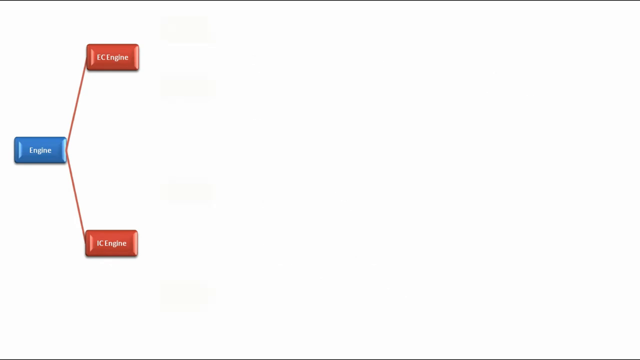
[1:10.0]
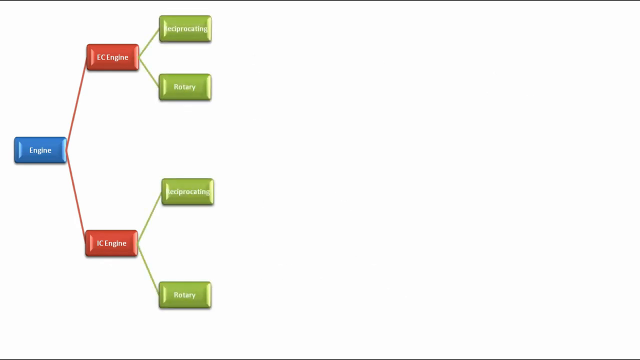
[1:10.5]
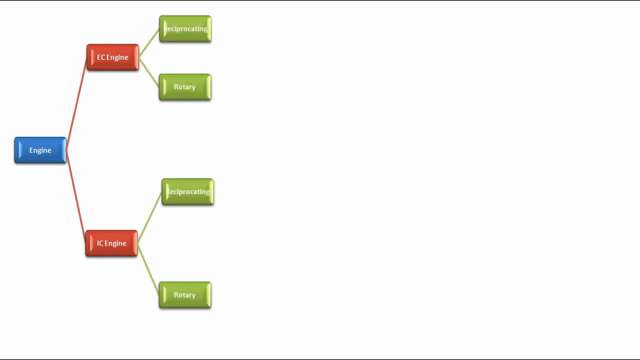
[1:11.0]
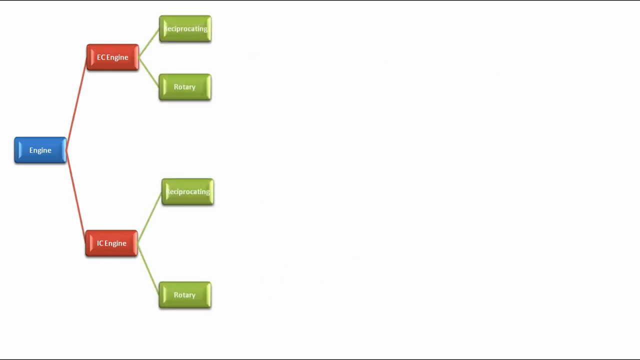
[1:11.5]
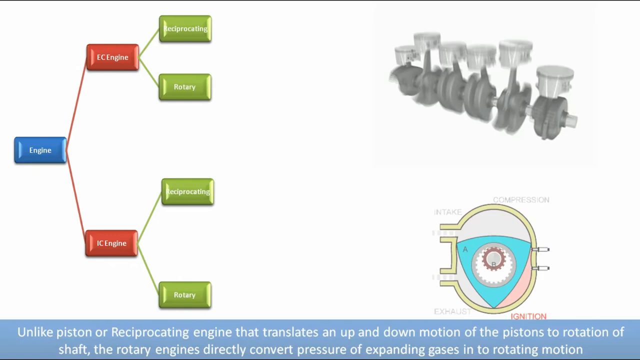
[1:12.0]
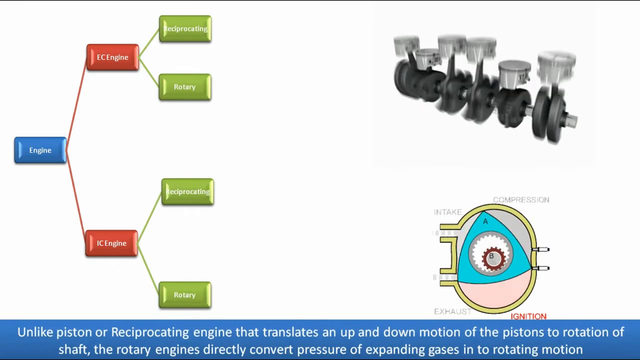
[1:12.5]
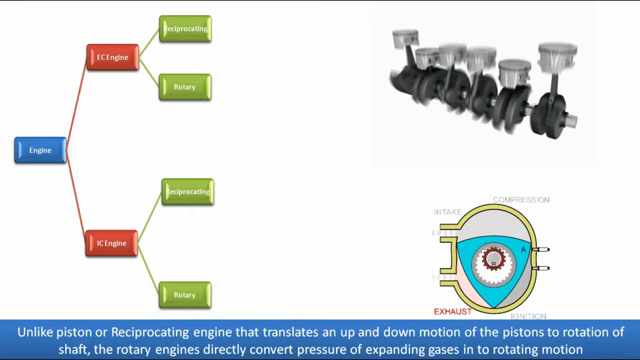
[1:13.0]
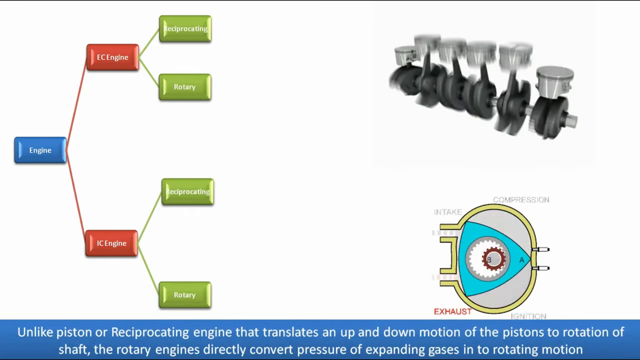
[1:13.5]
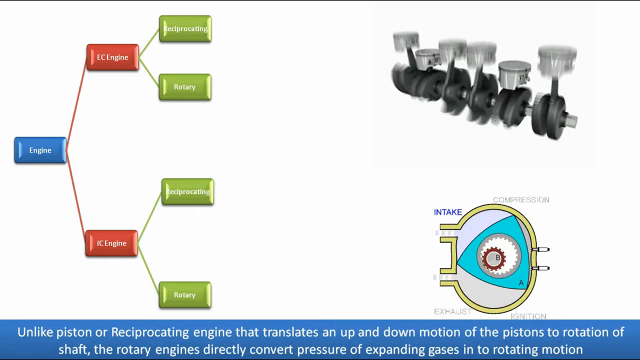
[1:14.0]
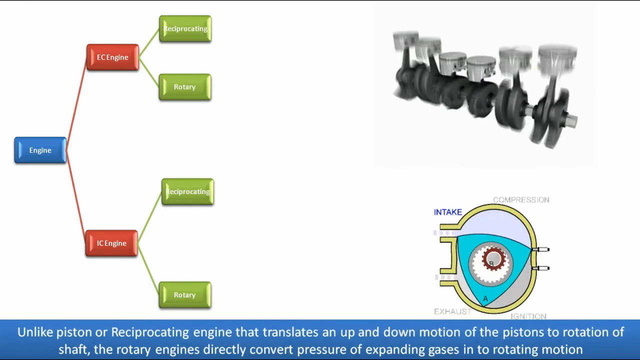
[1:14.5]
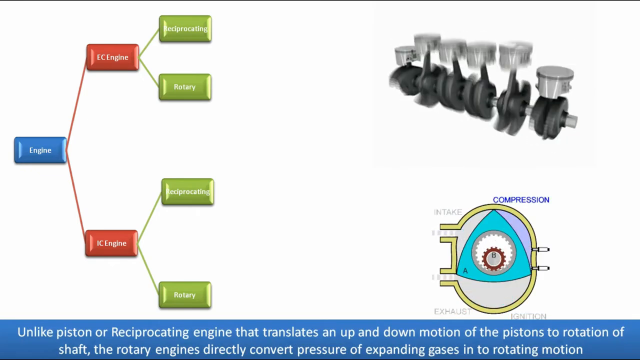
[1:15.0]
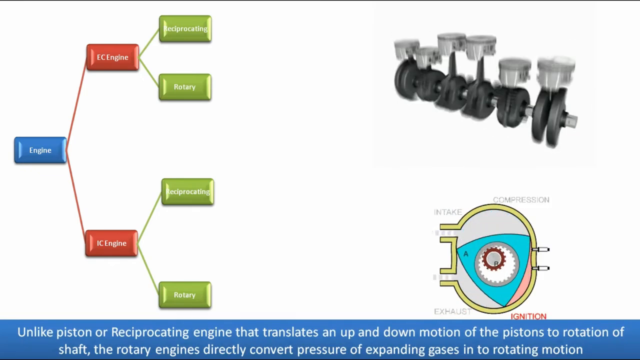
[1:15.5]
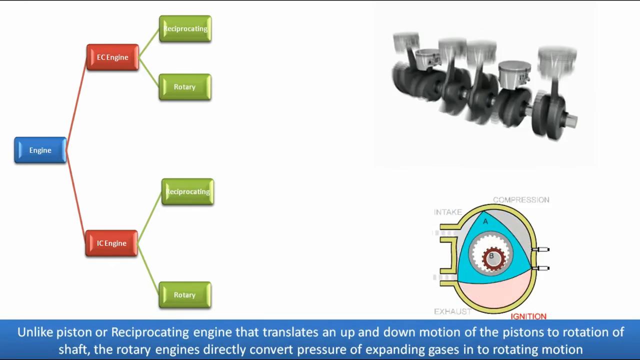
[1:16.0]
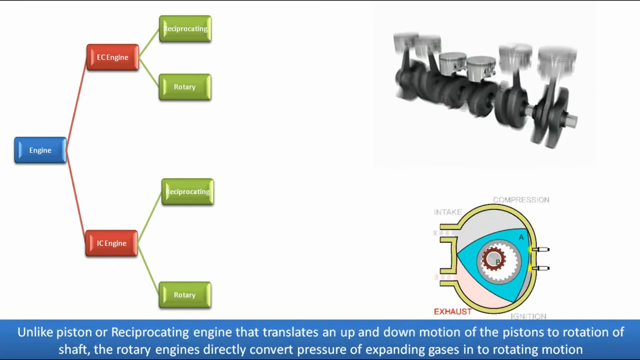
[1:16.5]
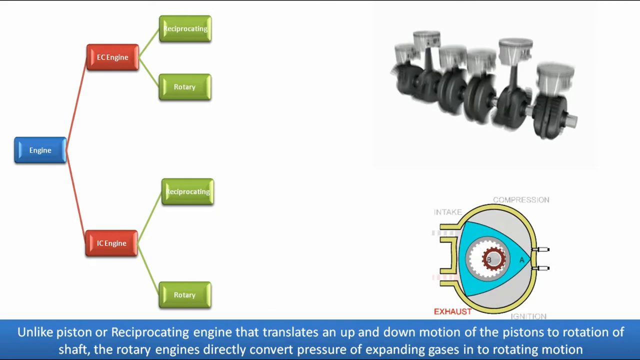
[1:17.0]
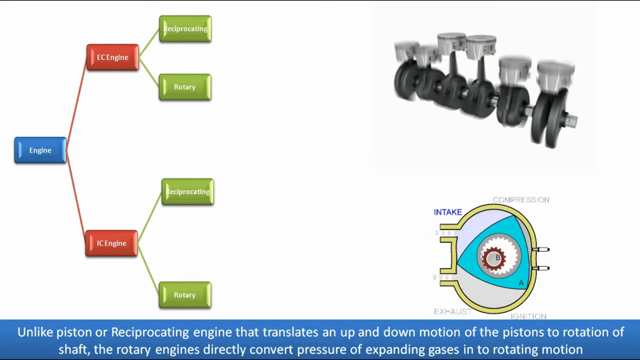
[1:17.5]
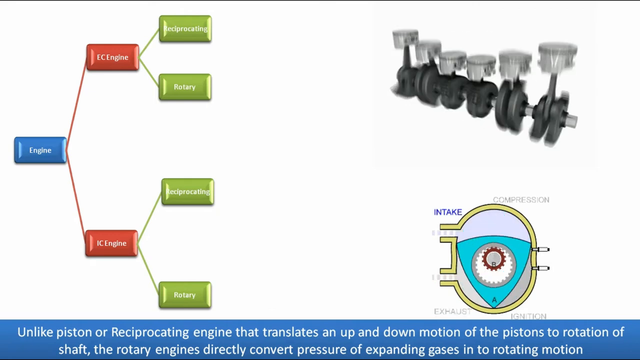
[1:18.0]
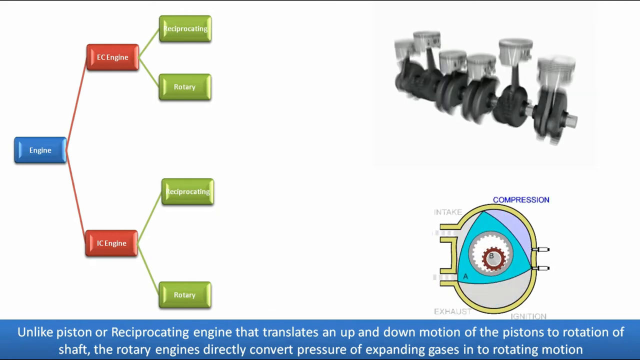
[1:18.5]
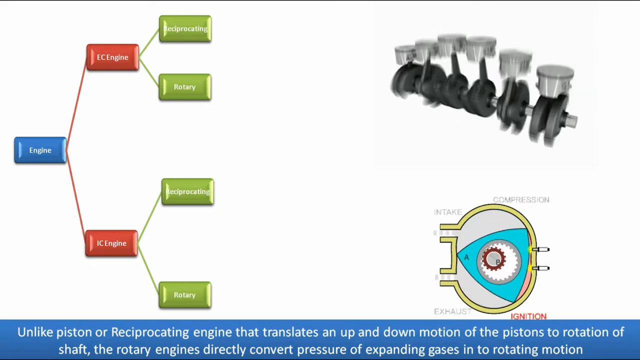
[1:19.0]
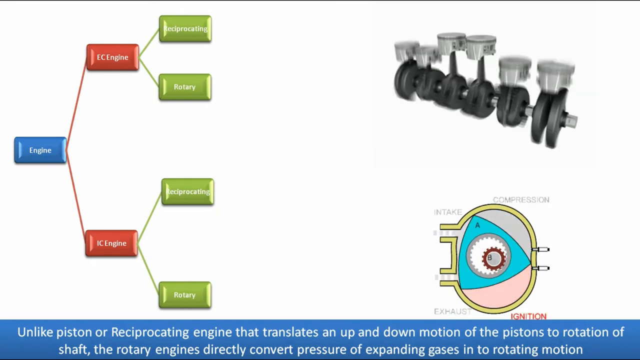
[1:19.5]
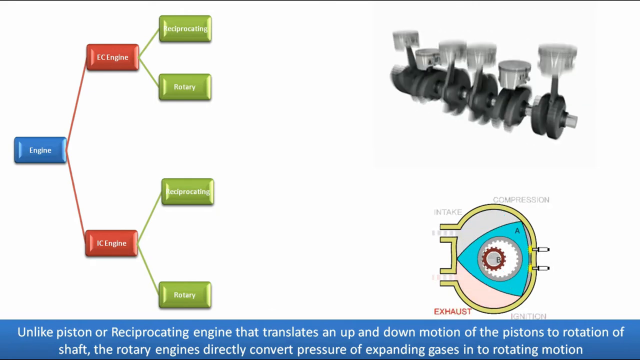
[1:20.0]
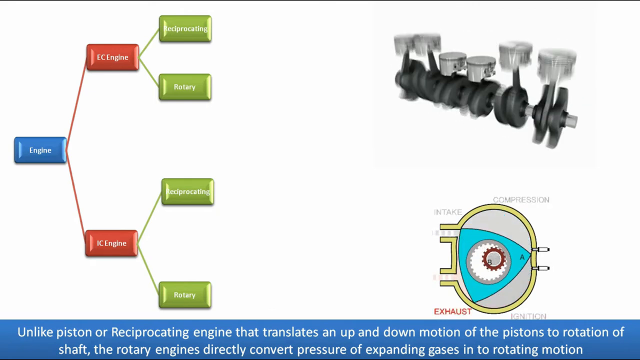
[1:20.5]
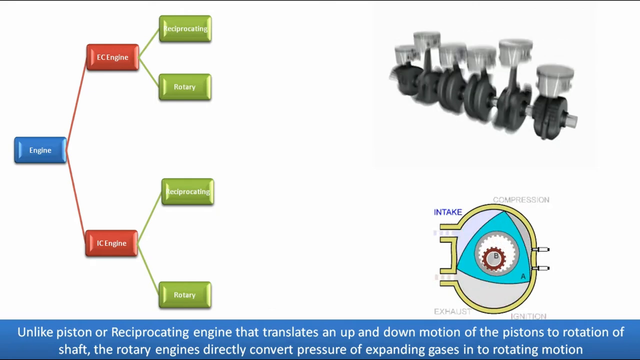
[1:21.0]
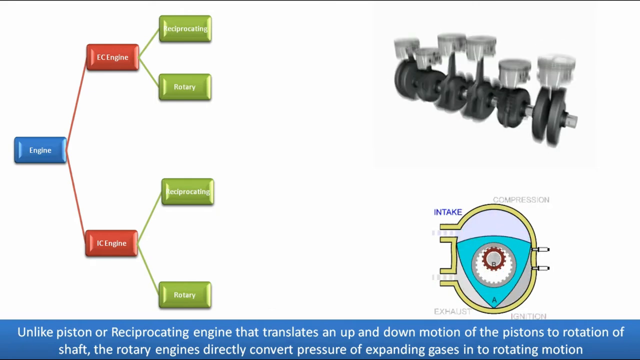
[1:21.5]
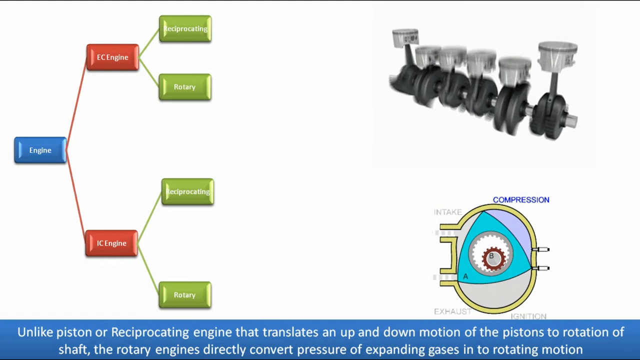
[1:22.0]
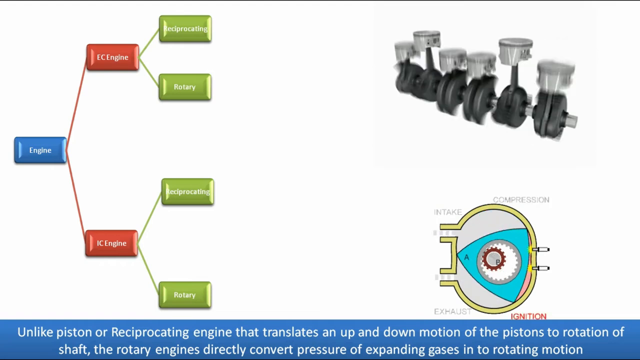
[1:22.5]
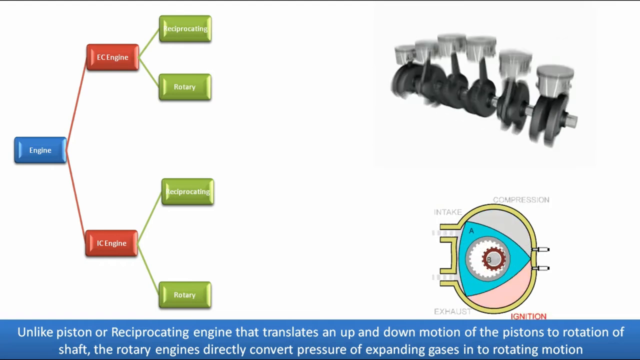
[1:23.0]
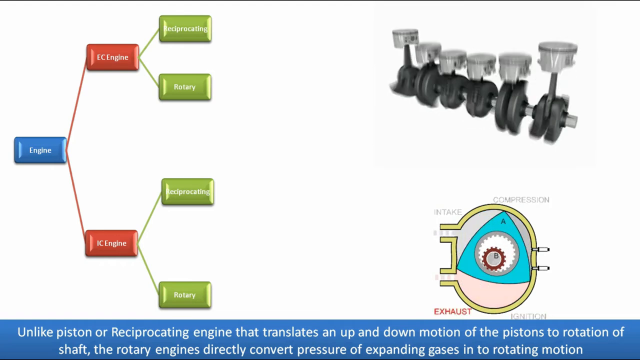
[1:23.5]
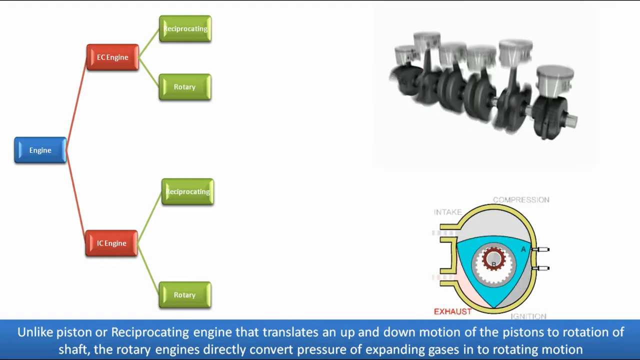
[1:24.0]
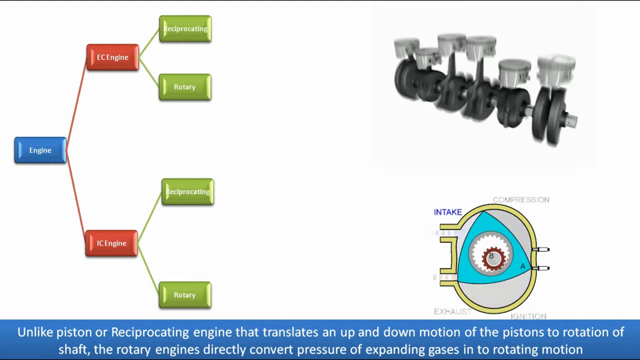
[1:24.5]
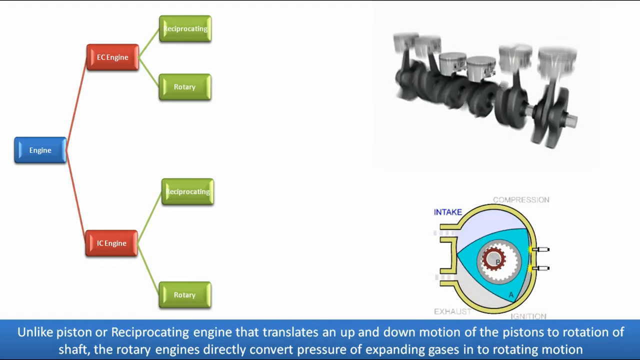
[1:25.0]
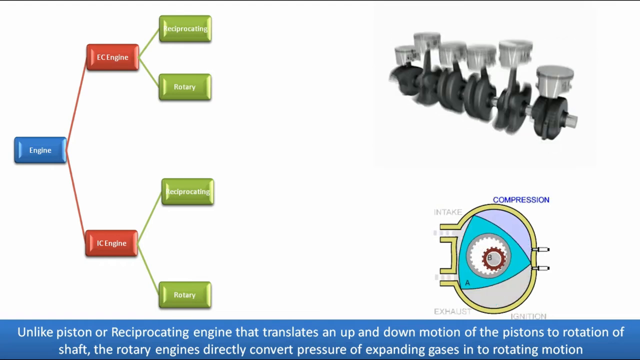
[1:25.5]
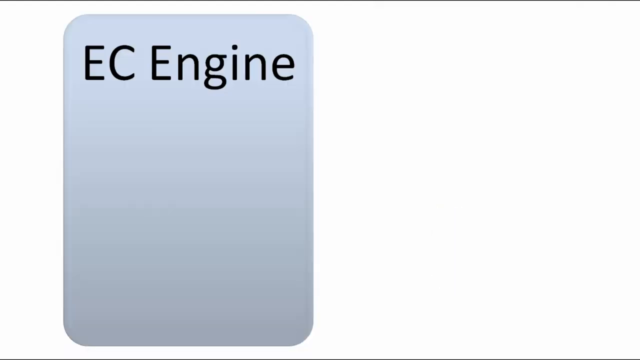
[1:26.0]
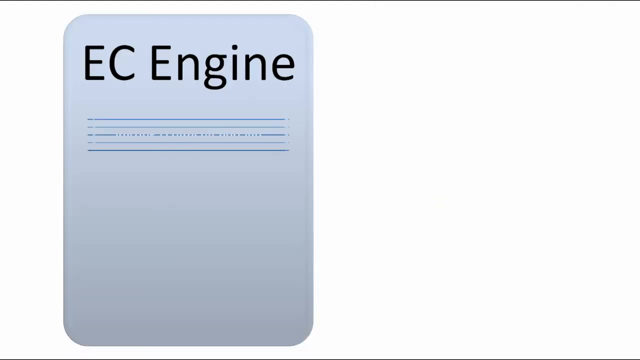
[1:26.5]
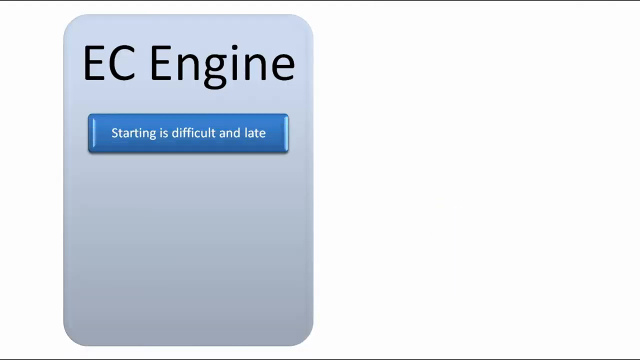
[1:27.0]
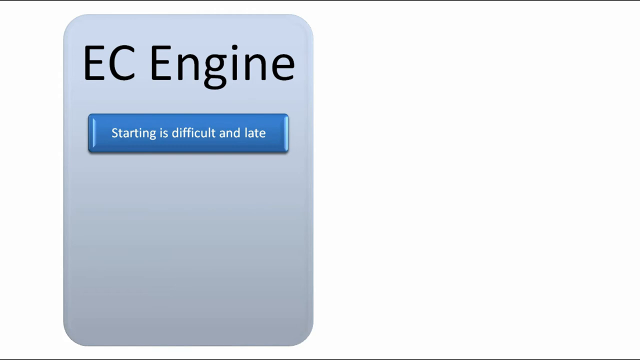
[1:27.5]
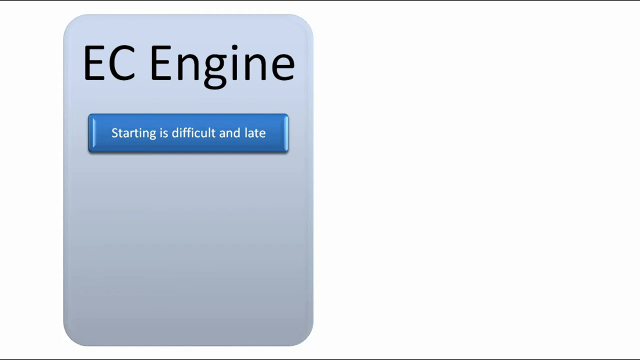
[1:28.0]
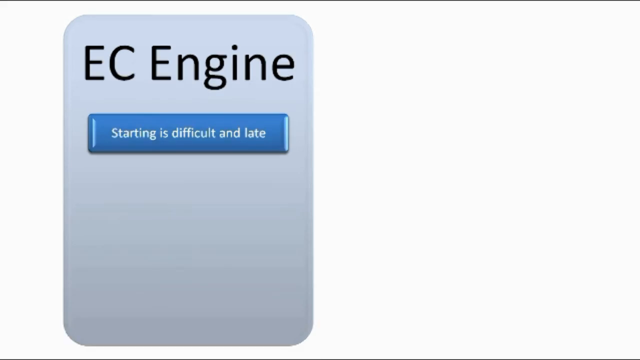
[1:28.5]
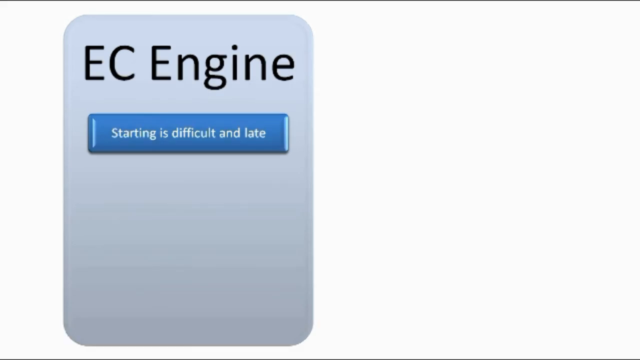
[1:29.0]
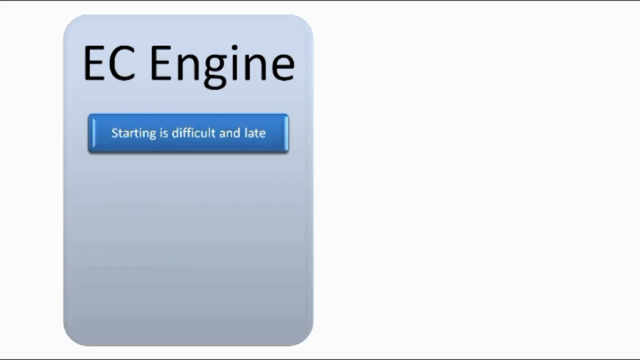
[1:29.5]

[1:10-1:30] The video appears to be a PowerPoint presentation. On a white background, a blue rectangle on the left reads "engine." Two red lines lead from it, one pointing up and one pointing down; the upper one points to a red rectangle reading "EC engine" and the lower one to a red rectangle reading "IC engine." Four more rectangles, green in color, appear: two coming out of the EC engine, reading "reciprocating" at the top and "rotary" at the bottom, and two coming out of the IC engine, also reading "reciprocating" at the top and "rotary" at the bottom. The video then transitions to a scene with two more diagrams on the right side and white text at the bottom reading "unlike piston or reciprocating engine that translates an up and down motion of the pistons to rotation of the shaft. The rotary engines directly convert pressure of expanding gases into rotating motion." At the top right is what looks like a picture of many pistons going up and down, connected to what looks like a metal bar and some black things, rotating like an engine. At the bottom is a diagram that looks like a yellow oval with some sort of green triangle inside with a couple of gears, with "intake" and "compression" at the top and "exhaust" and "ignition" at the bottom. Blue triangles appear to rotate around inside this oval engine, and intake, compression, ignition and exhaust are highlighted slowly as it goes around in a clockwise pattern. The video then transitions to what looks like another PowerPoint slide: on the left is a light blue rectangle reading "EC engine" at the top in black text, and a blue rectangle appears reading "starting is difficult and late."